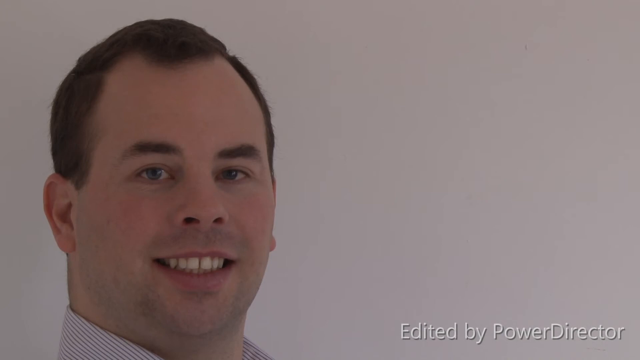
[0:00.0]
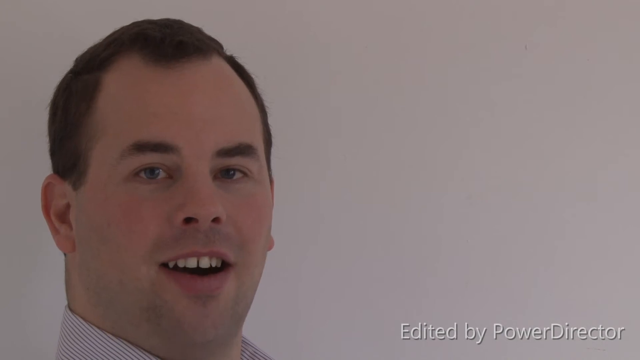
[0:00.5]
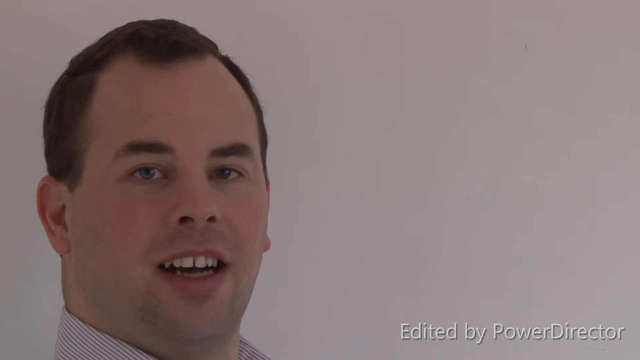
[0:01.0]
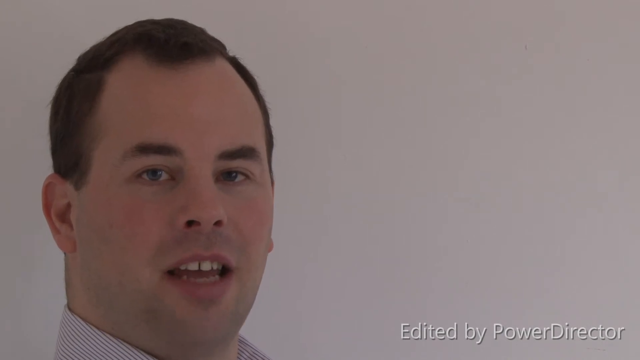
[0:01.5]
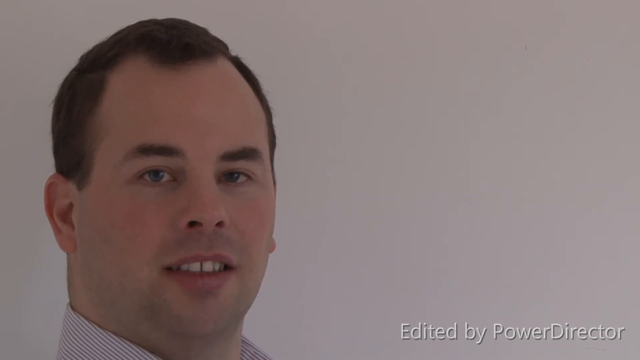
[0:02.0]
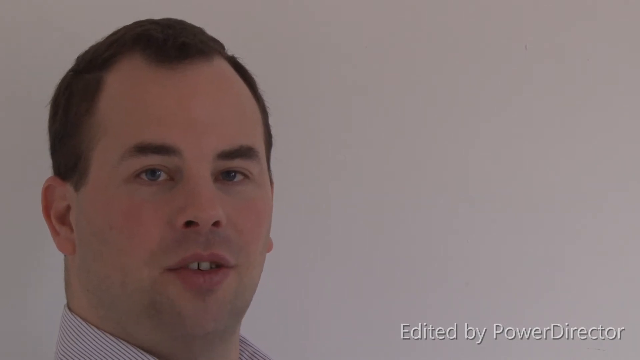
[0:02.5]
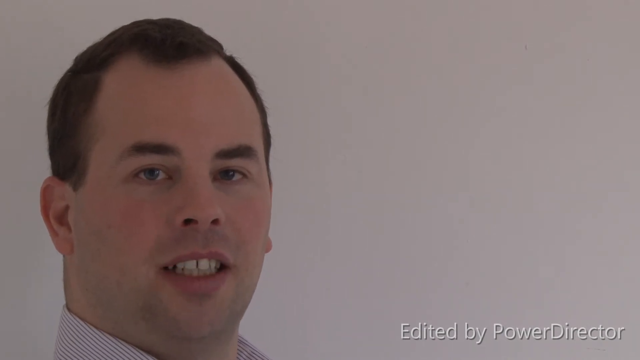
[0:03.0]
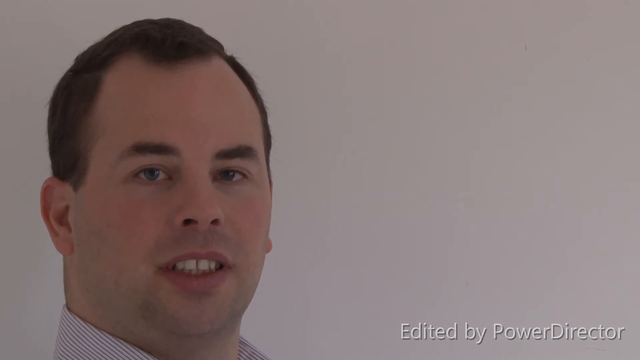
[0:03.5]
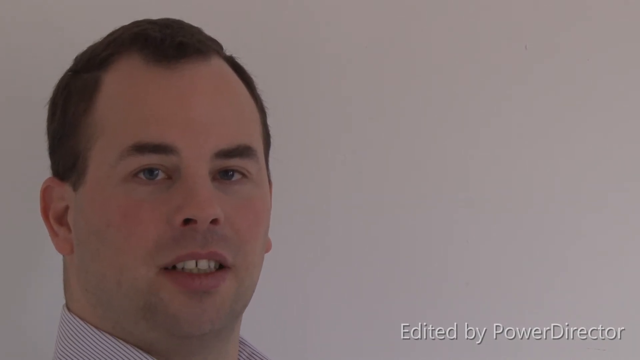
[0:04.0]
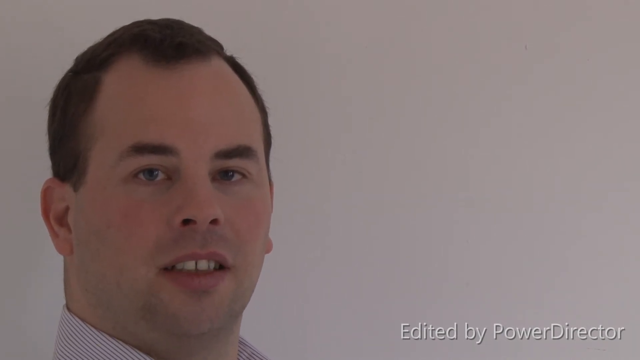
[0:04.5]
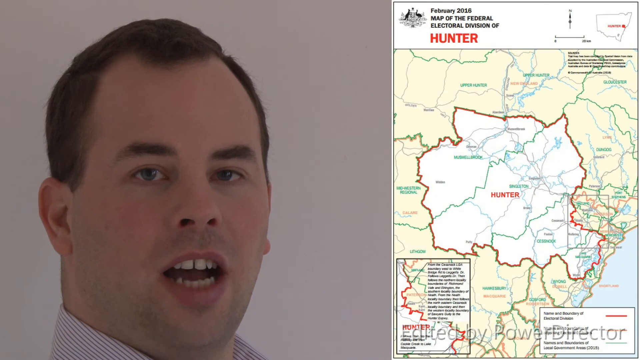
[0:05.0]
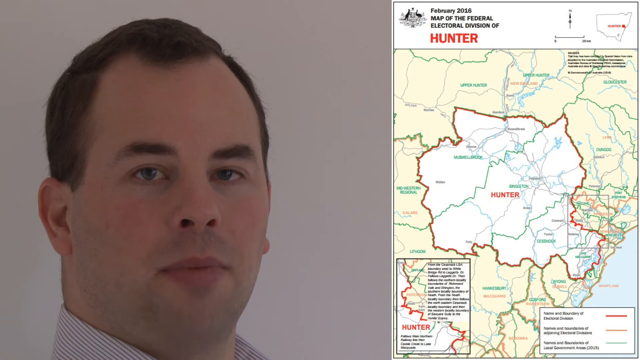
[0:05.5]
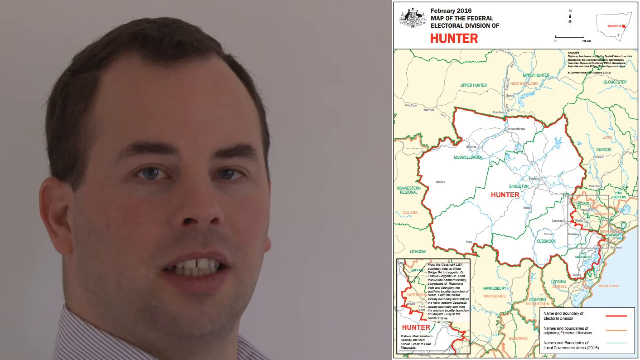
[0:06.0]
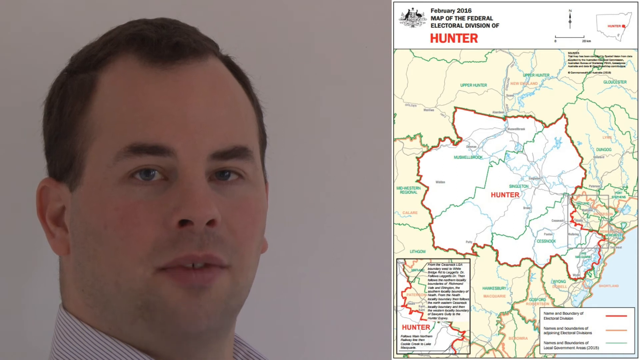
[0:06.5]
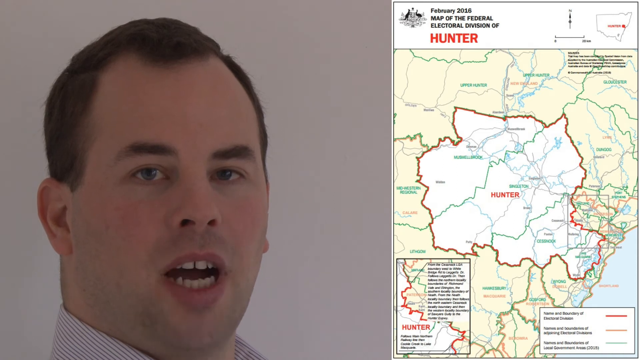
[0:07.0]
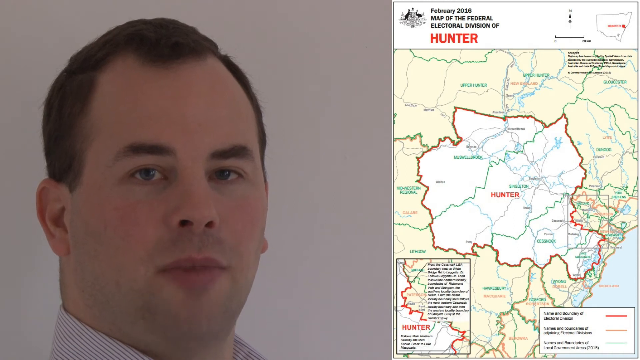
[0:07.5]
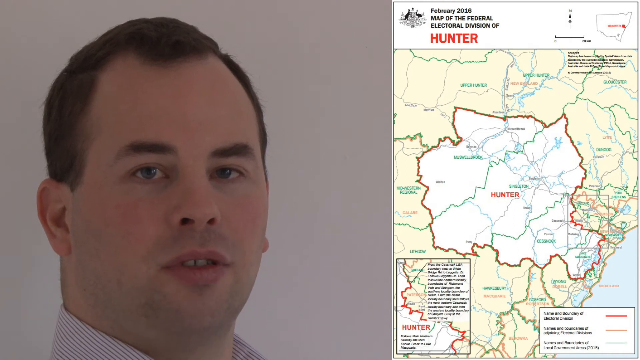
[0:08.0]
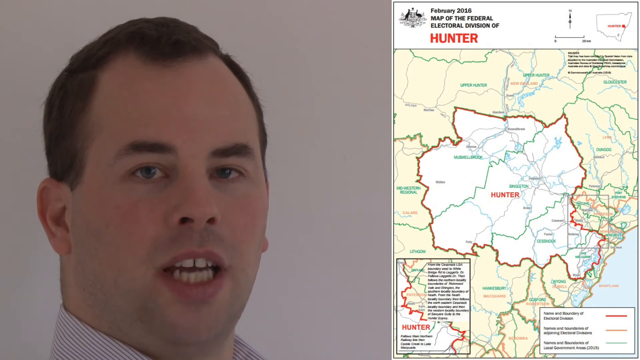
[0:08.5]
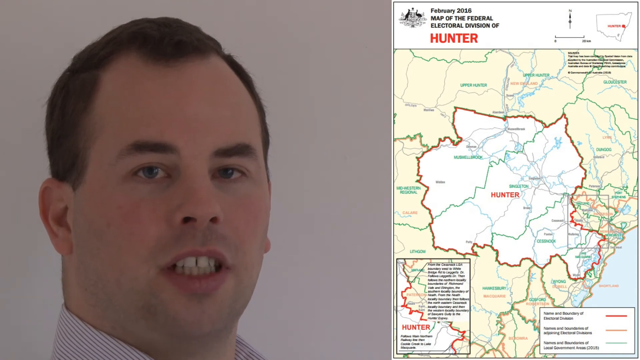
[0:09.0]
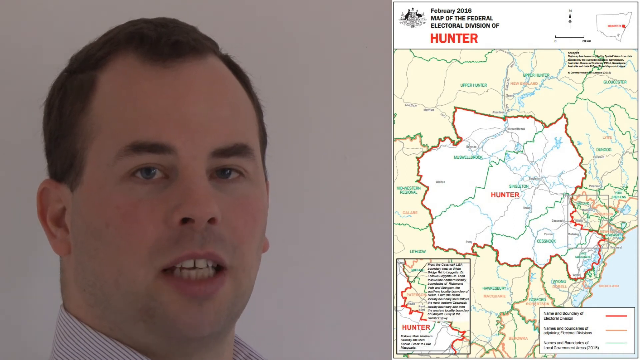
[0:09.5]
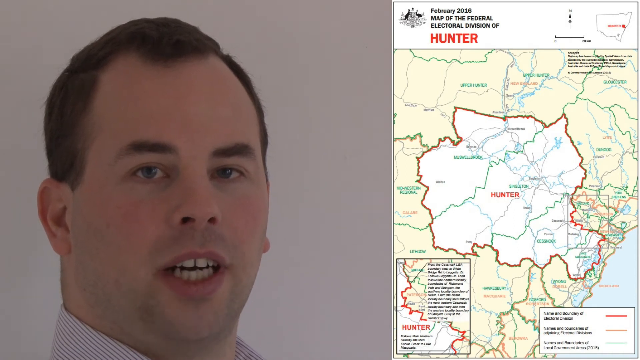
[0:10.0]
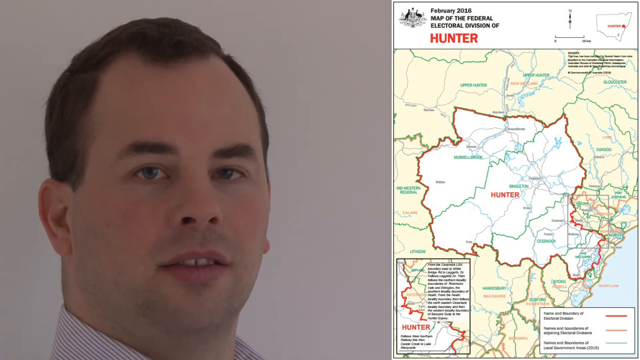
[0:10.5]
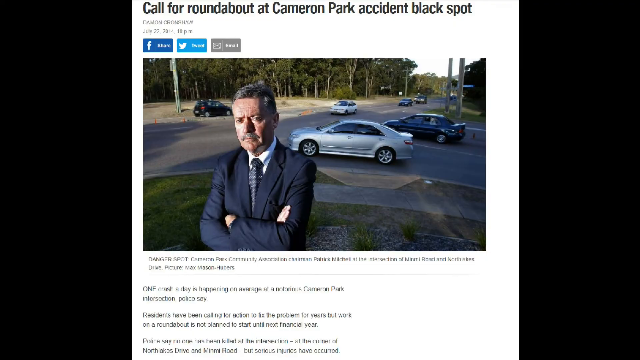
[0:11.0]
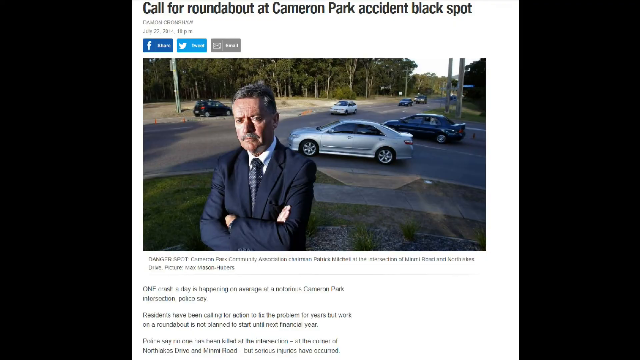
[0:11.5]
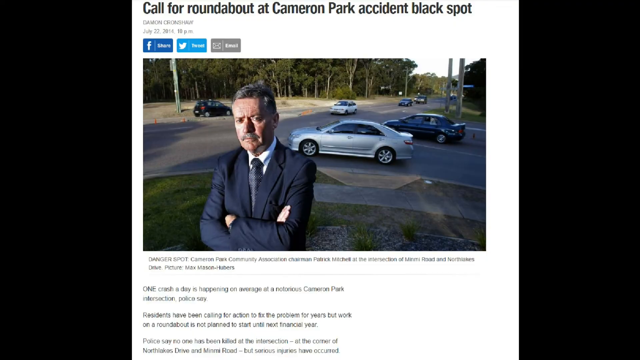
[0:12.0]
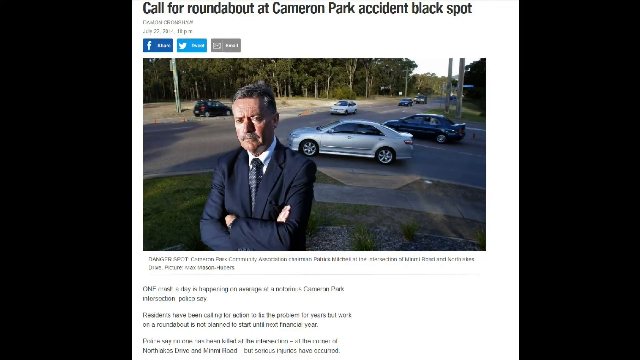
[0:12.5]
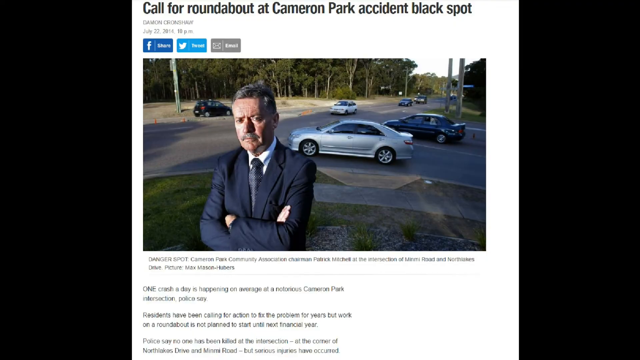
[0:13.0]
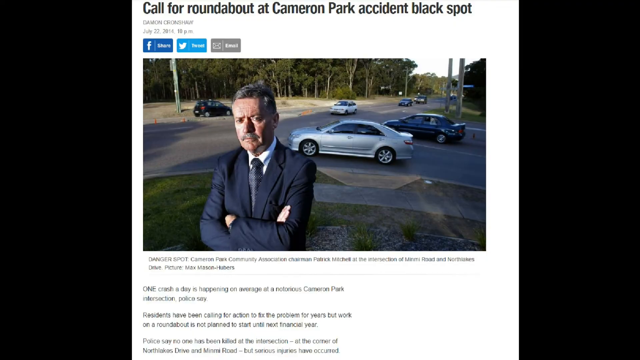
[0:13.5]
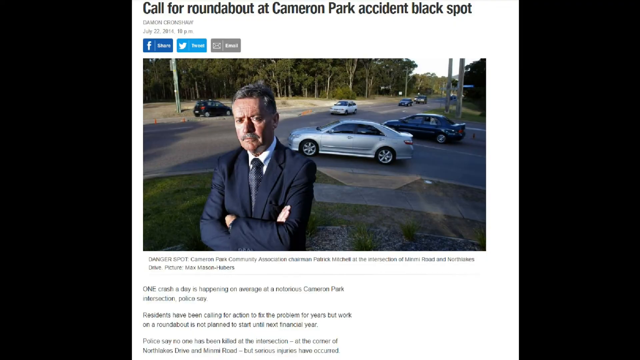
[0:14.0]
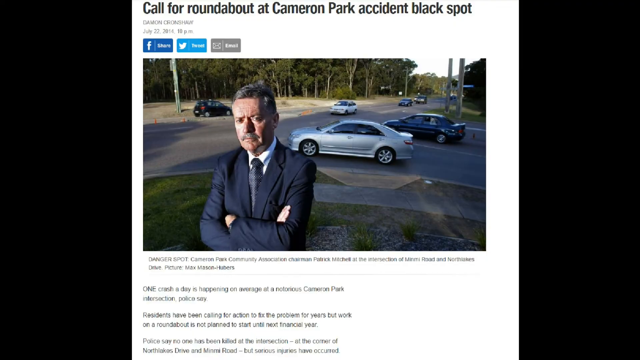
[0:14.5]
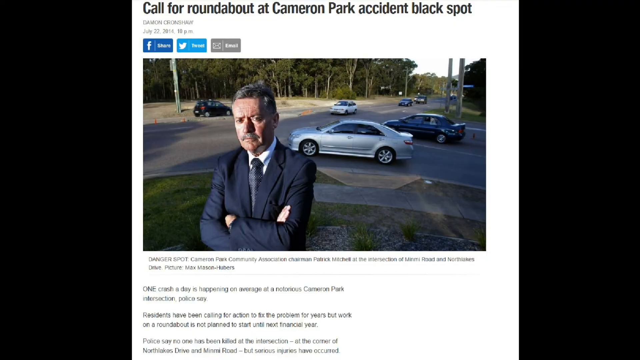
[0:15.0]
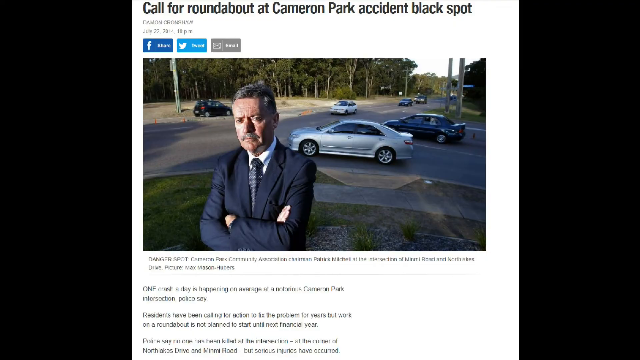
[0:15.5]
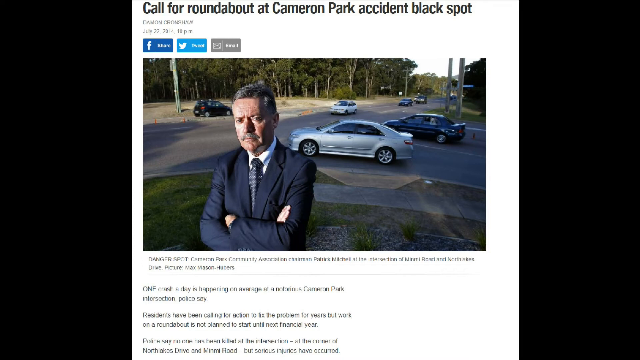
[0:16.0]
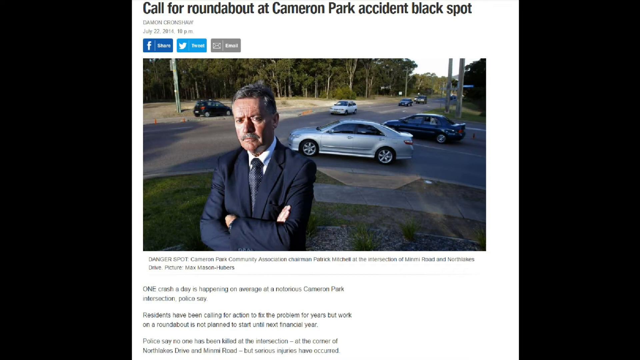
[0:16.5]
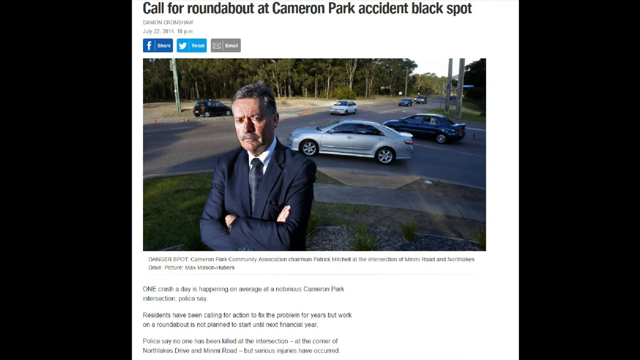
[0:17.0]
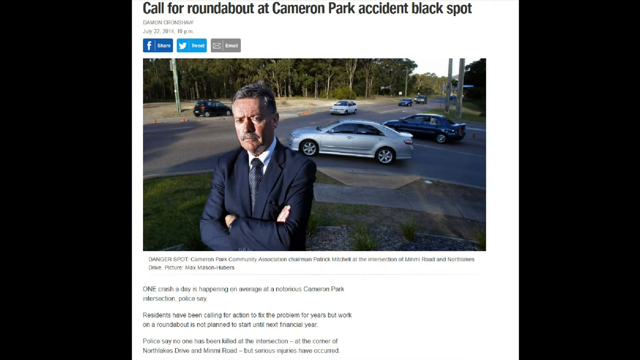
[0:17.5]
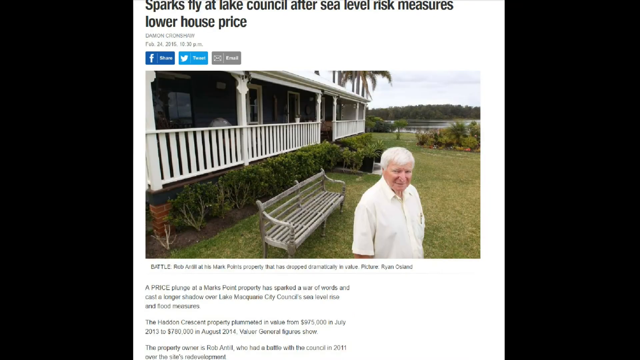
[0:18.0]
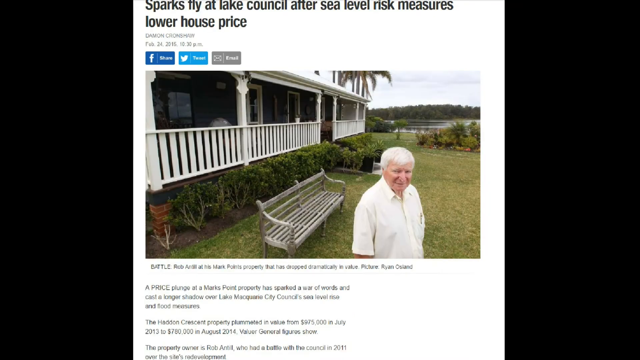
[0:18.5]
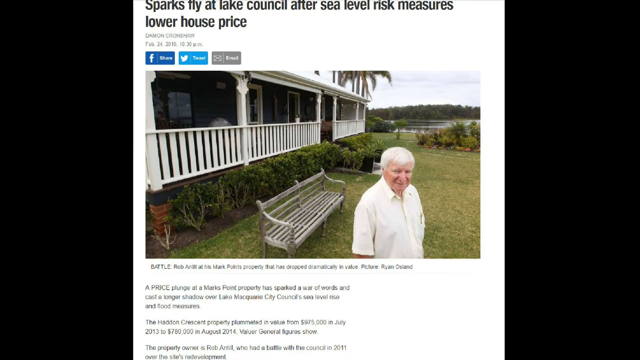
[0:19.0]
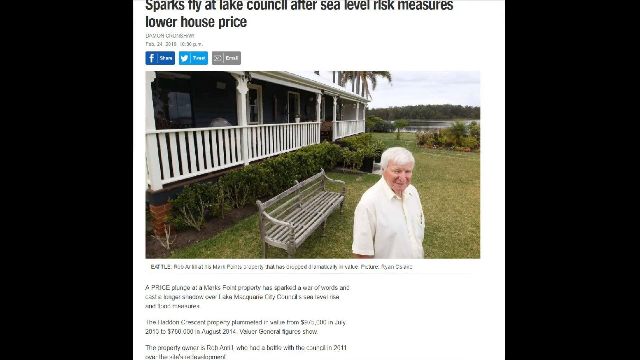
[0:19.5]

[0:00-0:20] Against a white background, a man with short brown hair appears on the left side of the screen, his head turned facing the camera. He has a slight smile as he talks toward the camera and wears a white striped collared shirt. White text runs along the bottom of the screen, and on the right side it says "Edited by Power Director". A map pops up on the right side of the screen, with black text at the top that reads "February 2016 map of the federal electoral division of Hunter". On the map is a red outline with red text in the middle showing the name "Hunter". The man remains on the left side of the screen facing the camera, his face expressionless as he talks. The scene changes to a screenshot of a news article whose black title at the top reads "Call for roundabout at Cameron Park accident black spot". Its image shows a man in a dark suit standing at an intersection with his hands crossed in front of him, while multiple cars in the intersection go in different directions. He stares at the camera with an angry expression. The scene then changes to another news article with a black title that reads "Sparks fly at Lake Council after sea level risk measures lower house price". It shows a man in a white collared button-down shirt standing on the grass in front of a dark house with a white porch, with a body of water in the background.